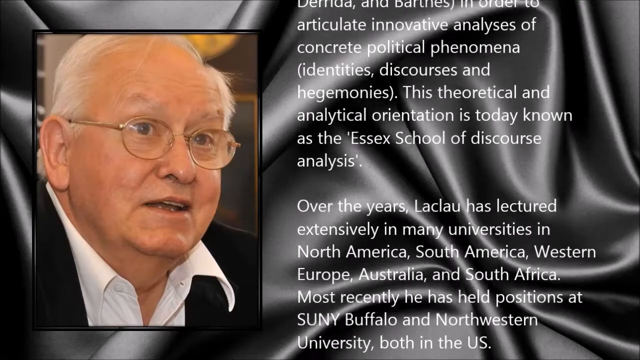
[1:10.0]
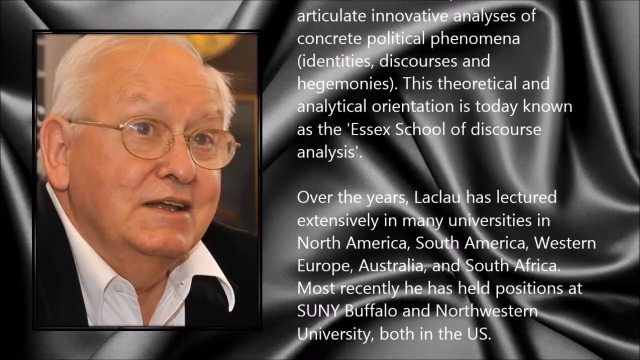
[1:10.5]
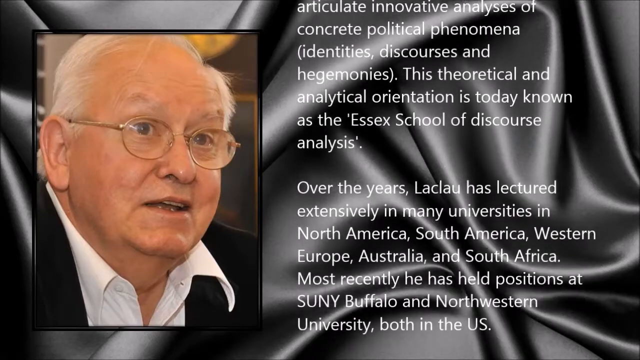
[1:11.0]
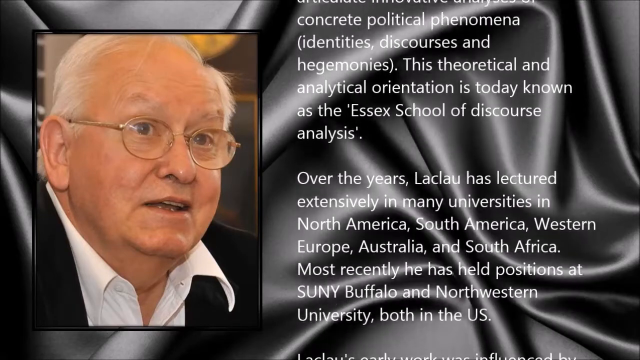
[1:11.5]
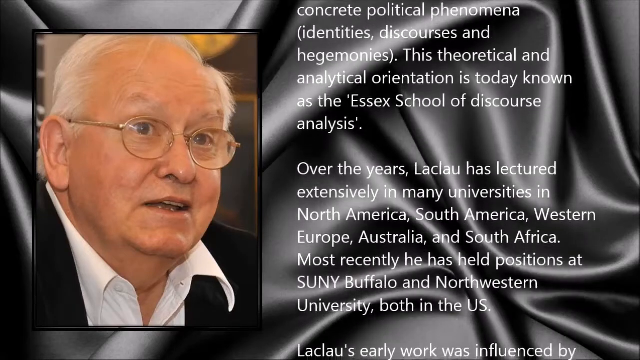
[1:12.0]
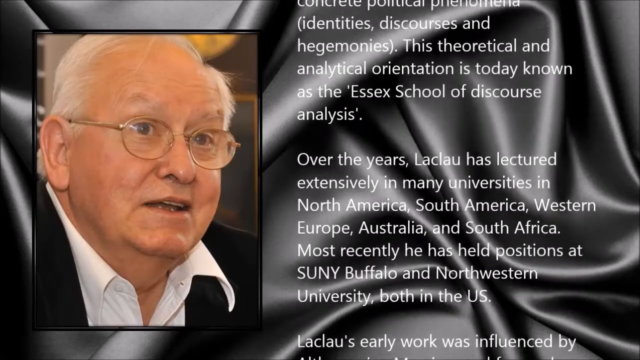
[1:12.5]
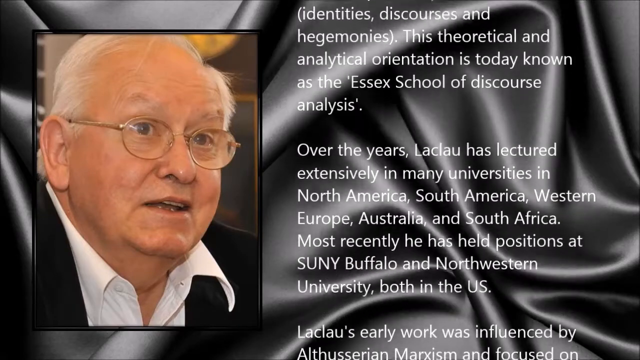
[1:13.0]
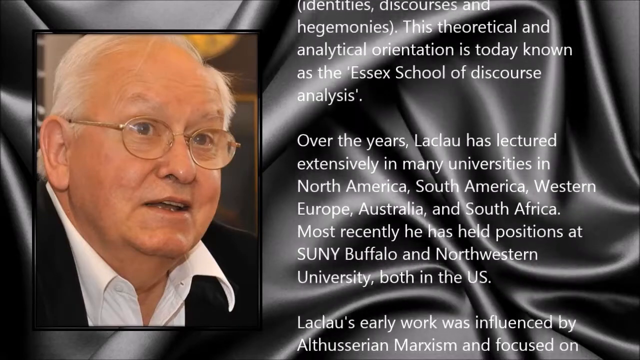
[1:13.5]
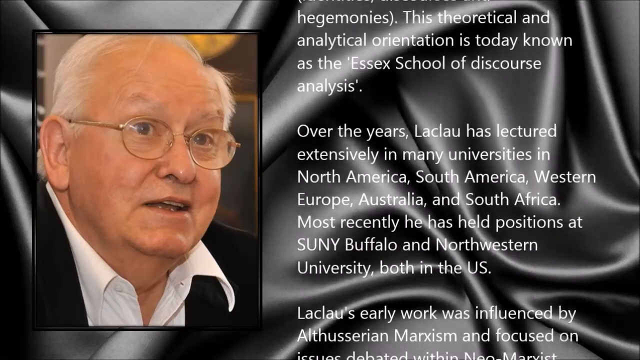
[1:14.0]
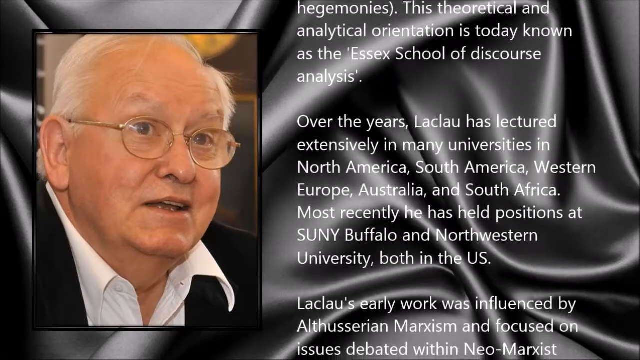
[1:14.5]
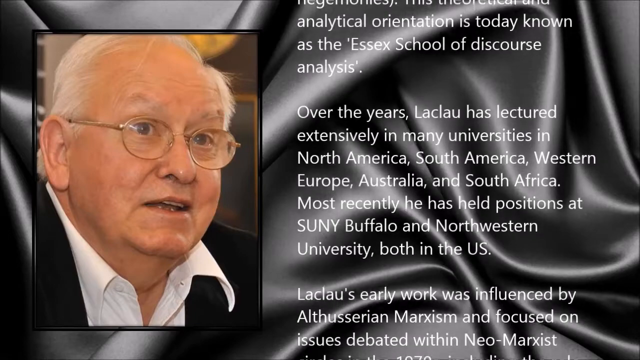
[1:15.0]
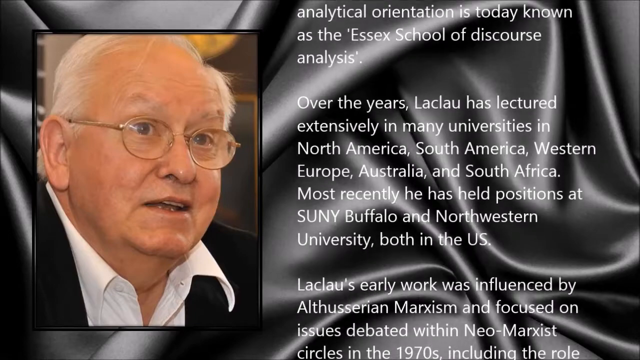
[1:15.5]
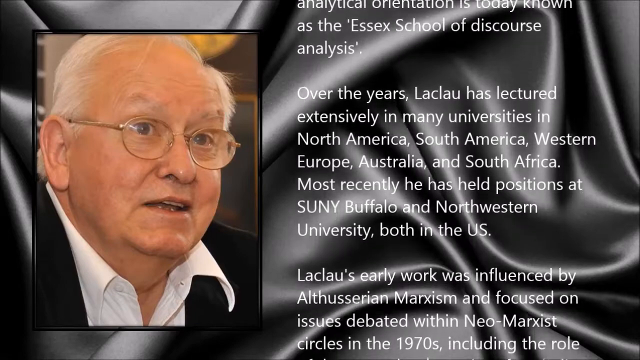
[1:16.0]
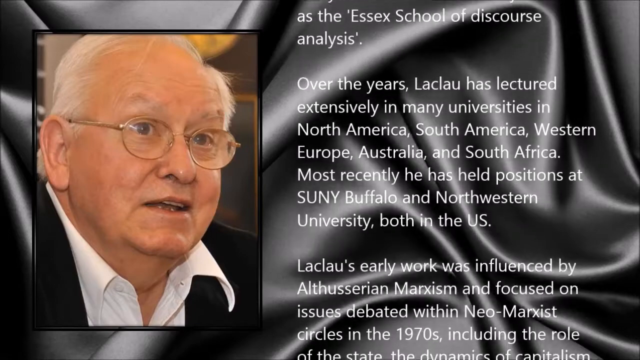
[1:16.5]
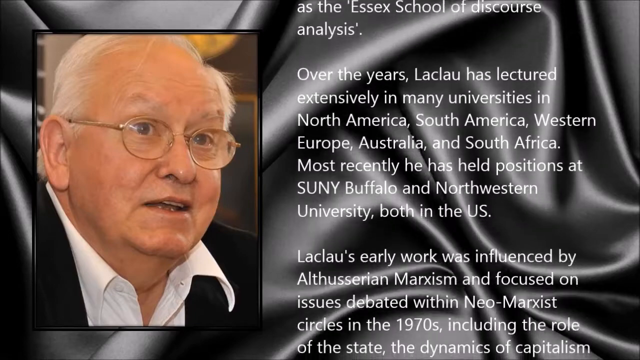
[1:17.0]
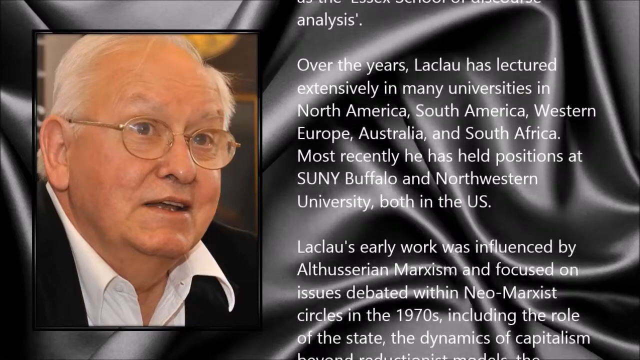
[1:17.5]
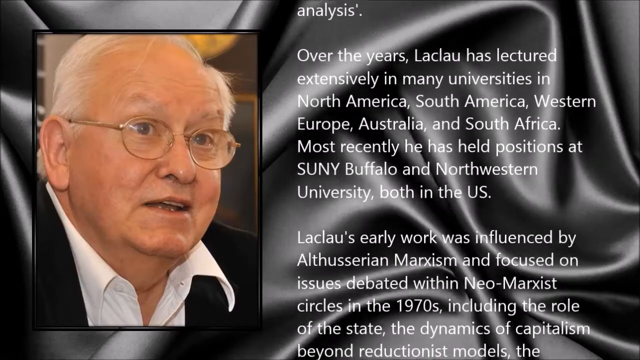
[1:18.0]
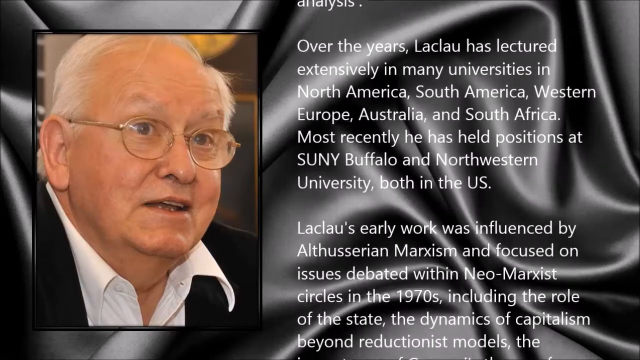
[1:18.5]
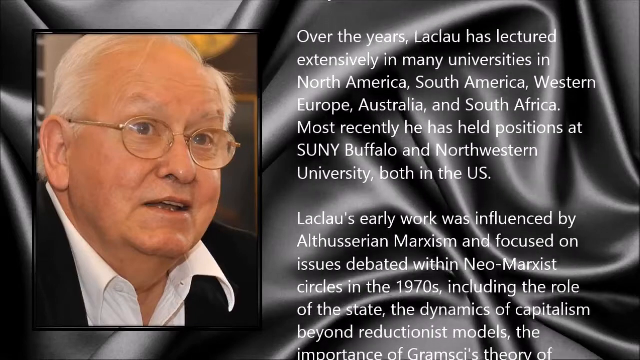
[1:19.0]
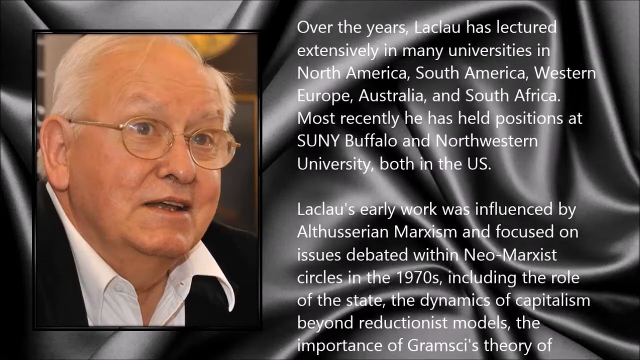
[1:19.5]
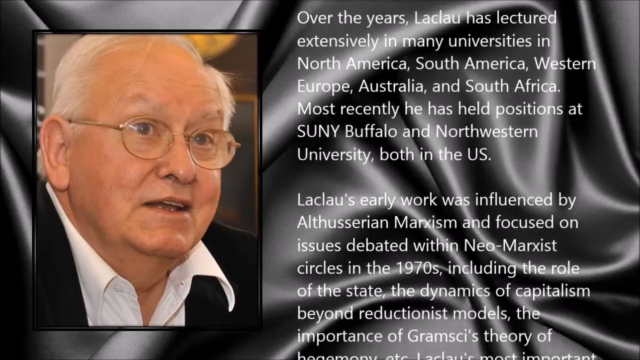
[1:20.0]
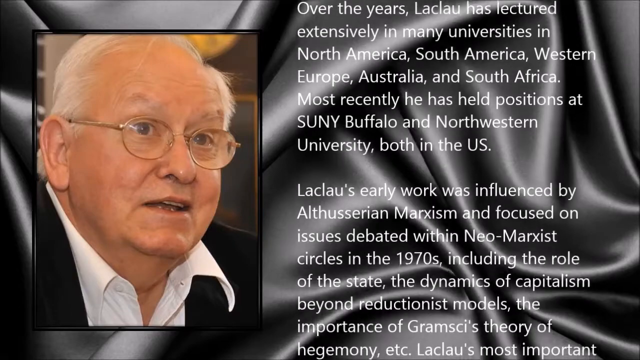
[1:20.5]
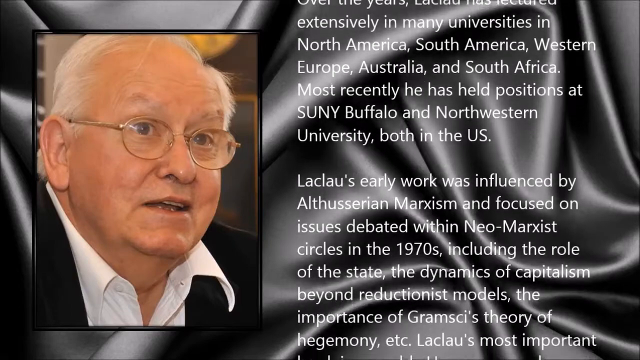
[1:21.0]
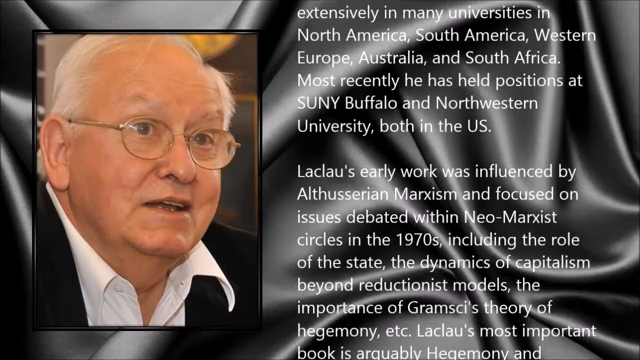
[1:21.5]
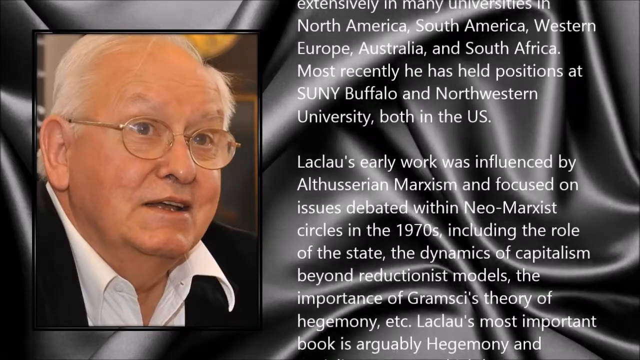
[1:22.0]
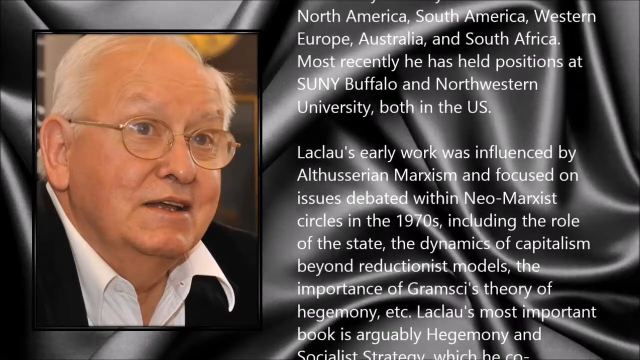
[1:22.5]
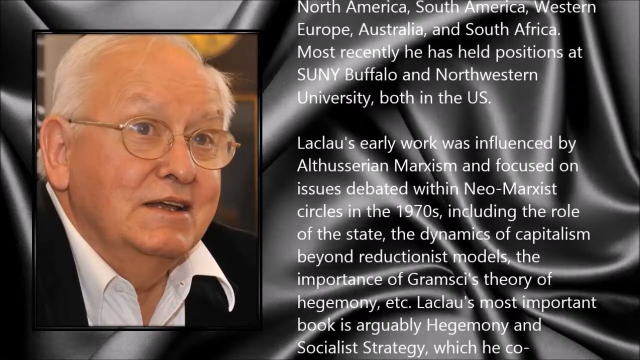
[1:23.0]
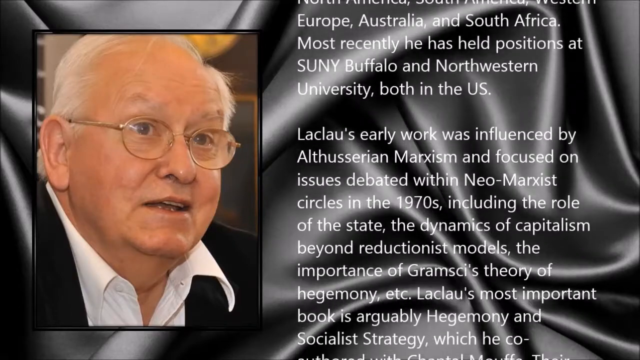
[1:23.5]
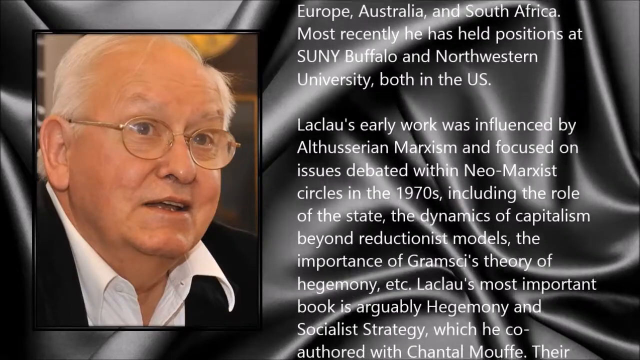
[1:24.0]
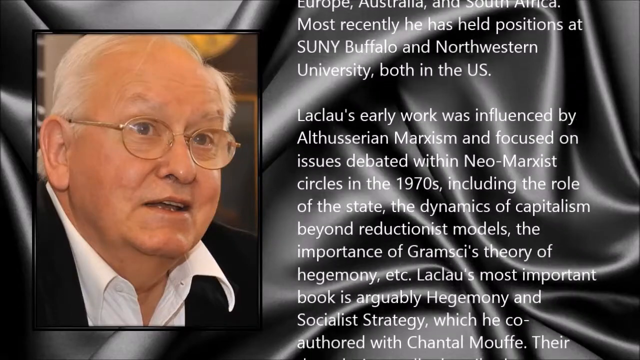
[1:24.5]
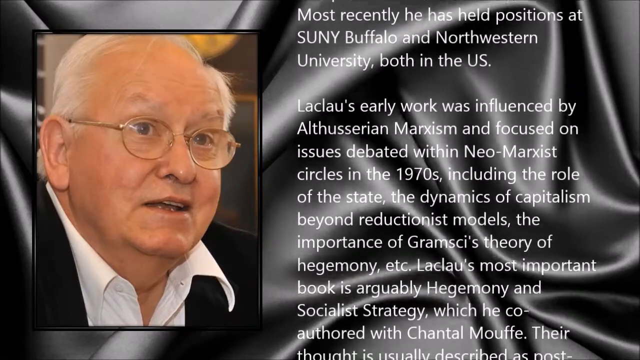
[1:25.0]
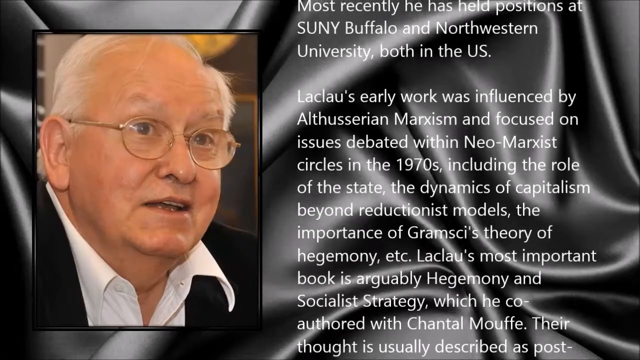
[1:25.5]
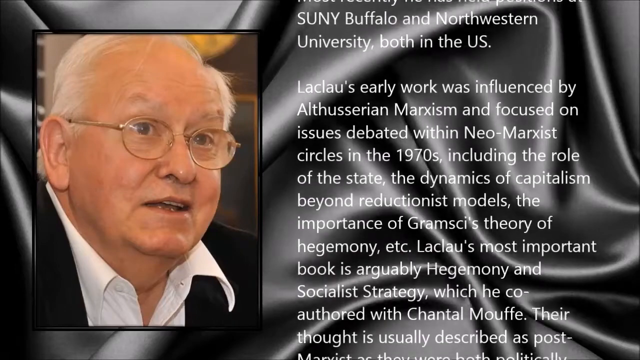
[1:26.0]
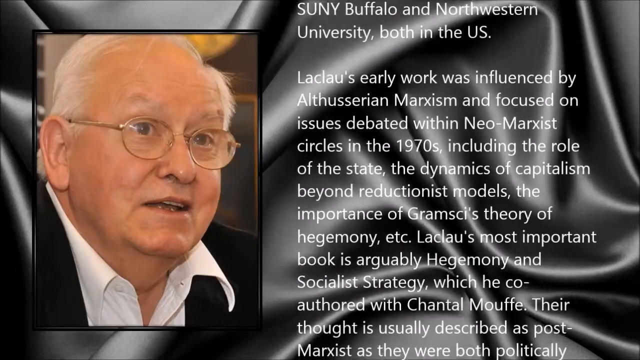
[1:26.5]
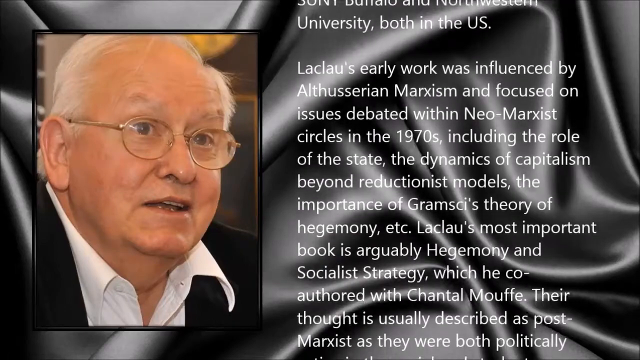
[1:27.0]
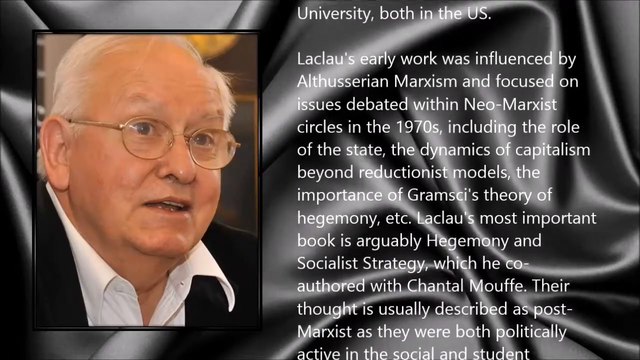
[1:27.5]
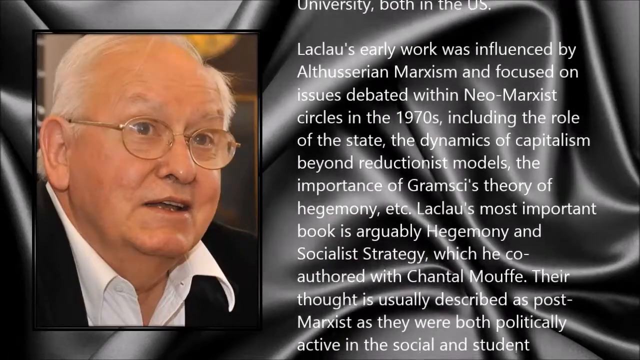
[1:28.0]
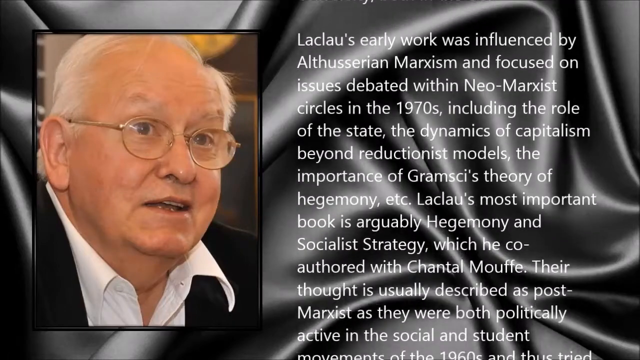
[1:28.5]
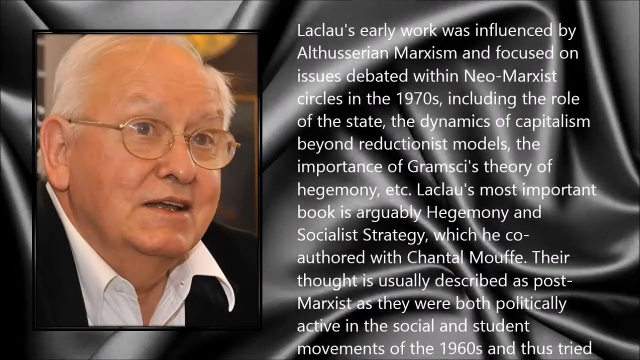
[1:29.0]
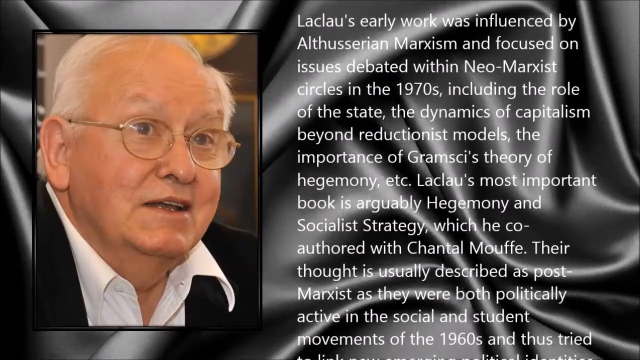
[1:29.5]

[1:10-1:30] A large picture of a white man with gray hair and glasses is shown, and next to it a very extensive write-up about his life scrolls up the screen: how he was a professor, where he went to school over the years, how he gave many lectures, where he lived, where he is from, where he was born, his early work and who influenced him. The picture and words are over a satin type of material draped in a casual, loopy way with very soft edges showing; it looks almost like it is on something level that allows it to drape this way.